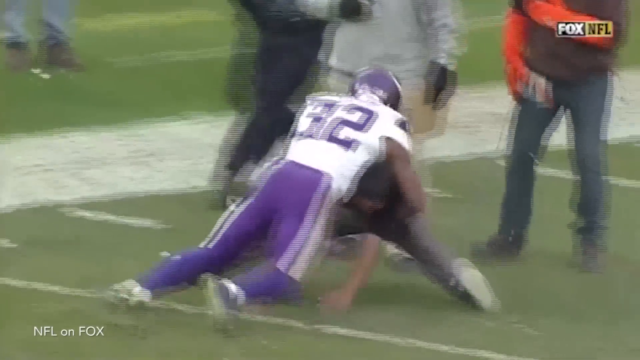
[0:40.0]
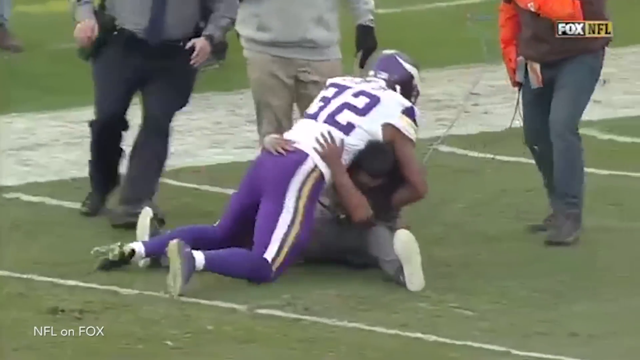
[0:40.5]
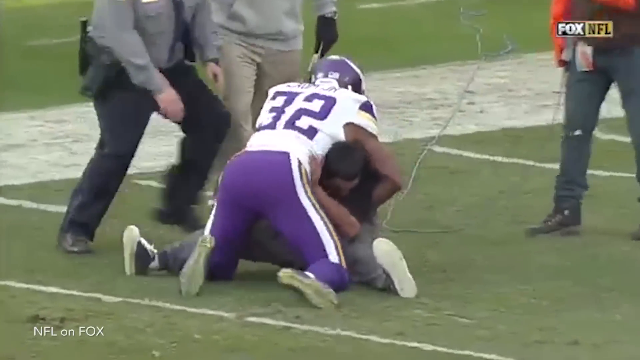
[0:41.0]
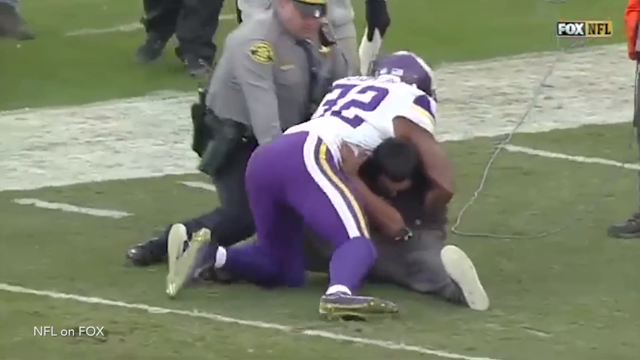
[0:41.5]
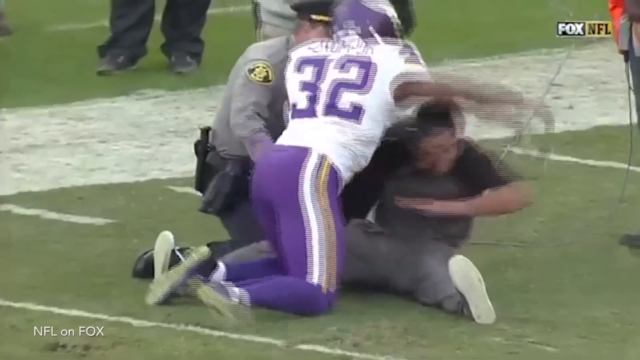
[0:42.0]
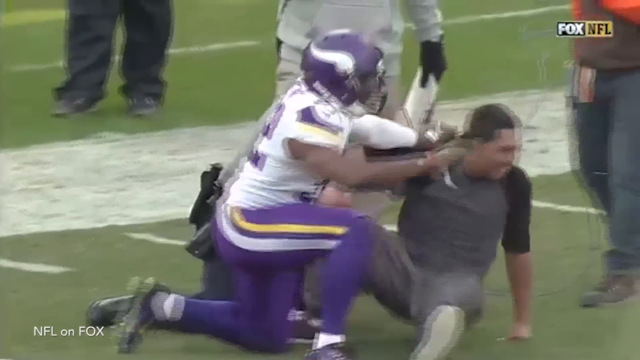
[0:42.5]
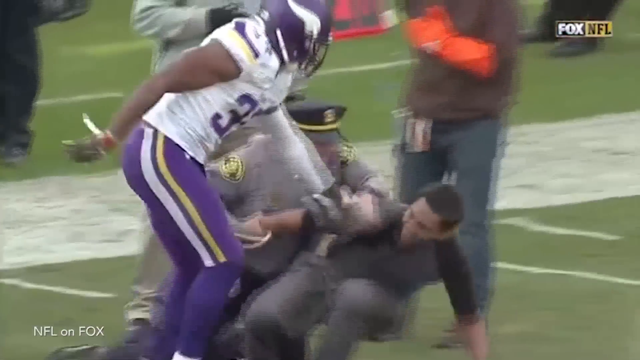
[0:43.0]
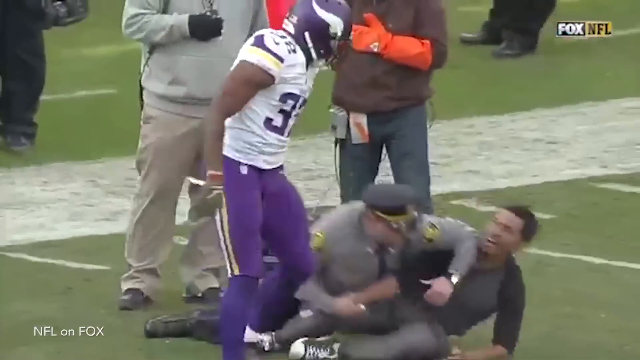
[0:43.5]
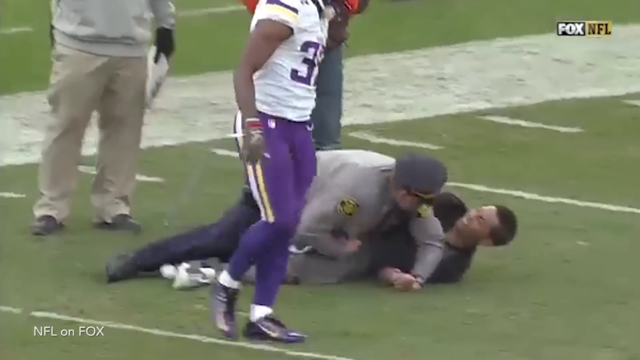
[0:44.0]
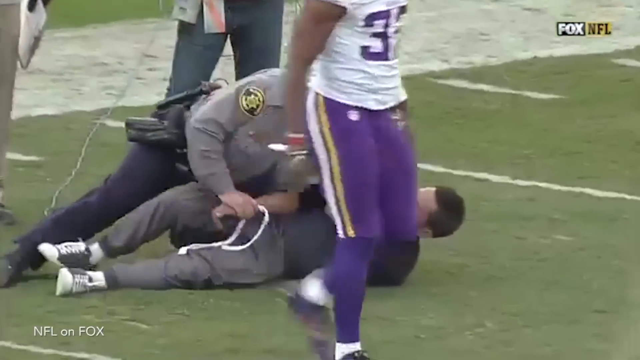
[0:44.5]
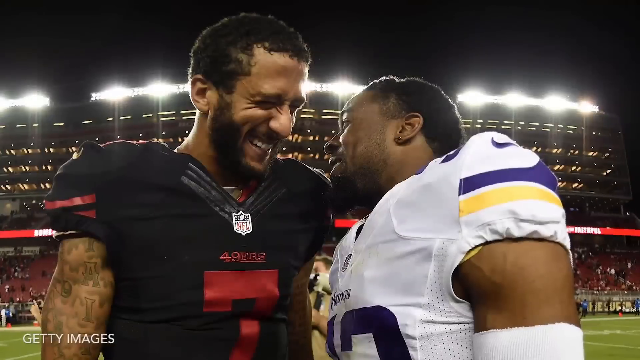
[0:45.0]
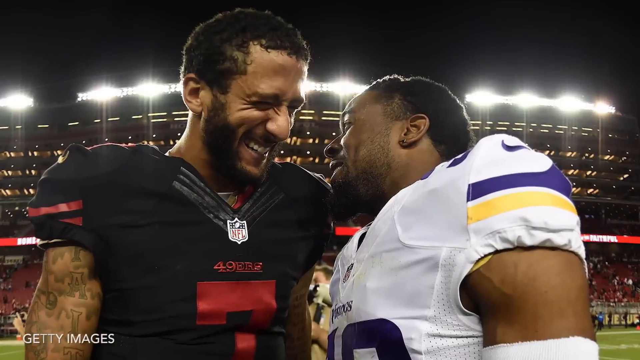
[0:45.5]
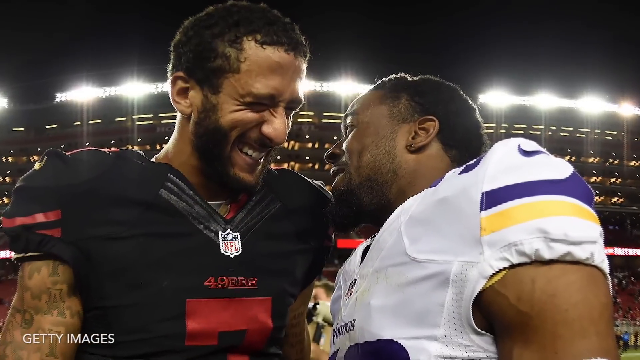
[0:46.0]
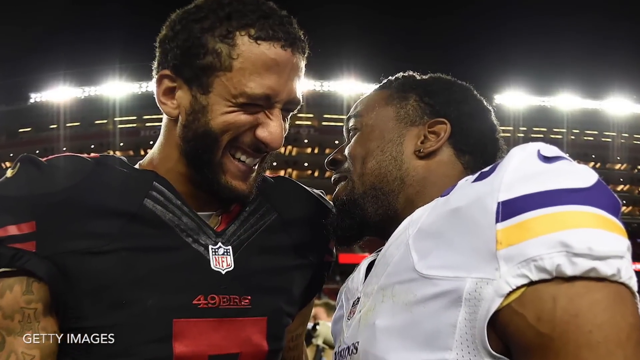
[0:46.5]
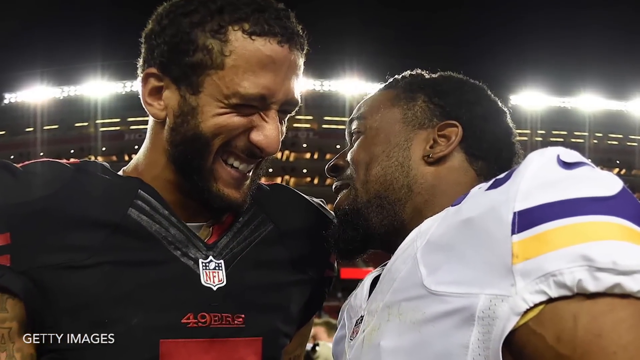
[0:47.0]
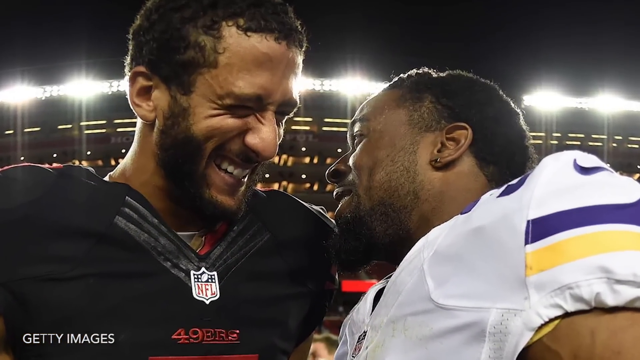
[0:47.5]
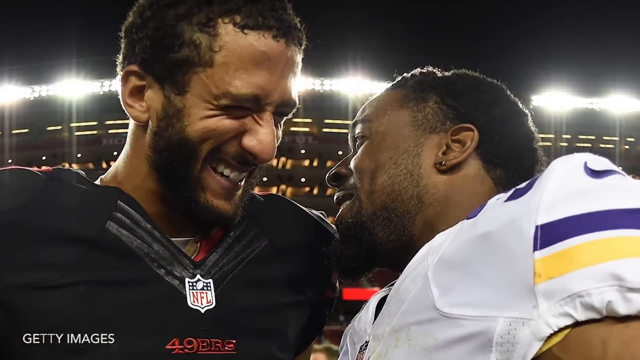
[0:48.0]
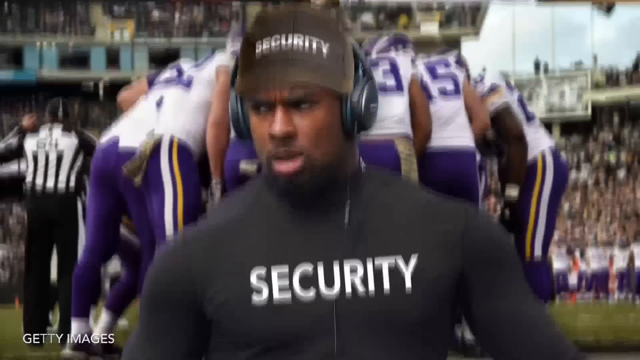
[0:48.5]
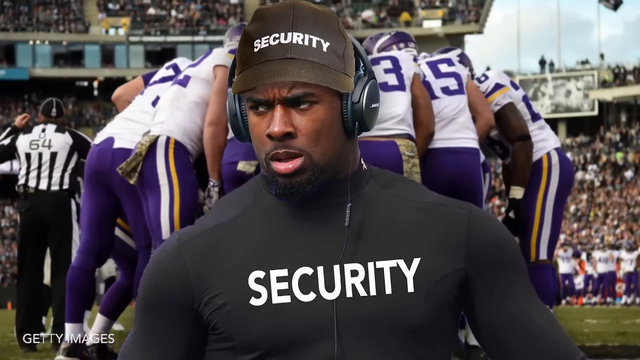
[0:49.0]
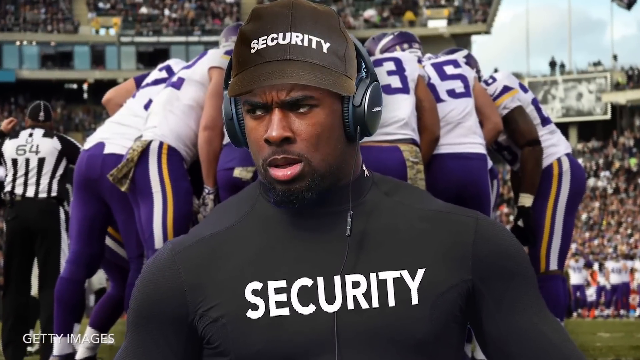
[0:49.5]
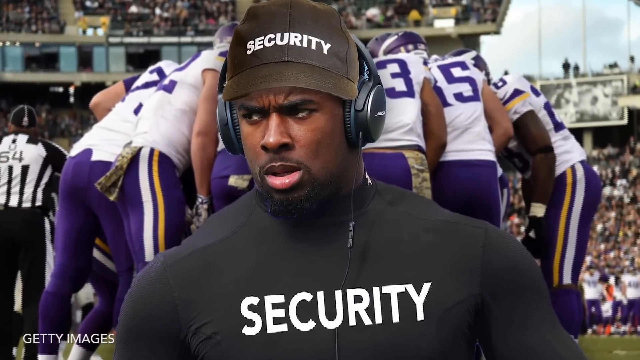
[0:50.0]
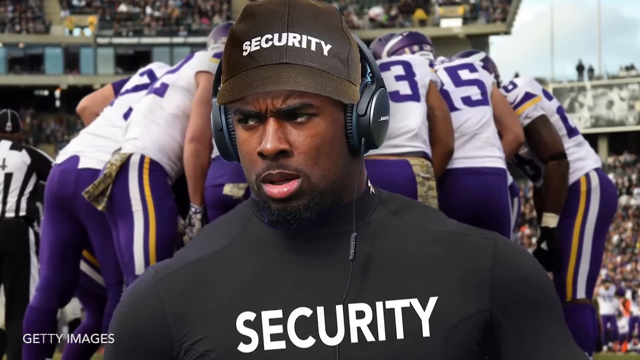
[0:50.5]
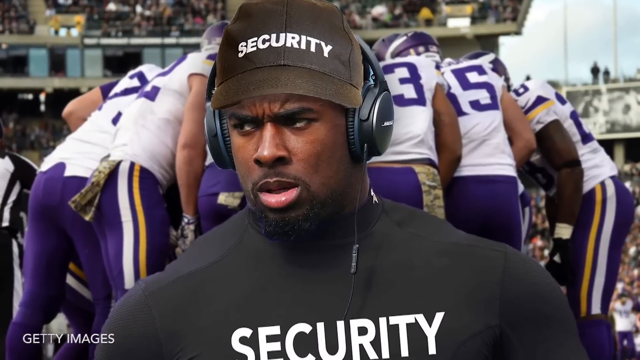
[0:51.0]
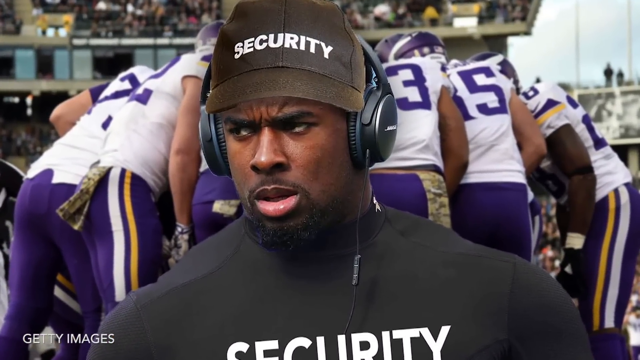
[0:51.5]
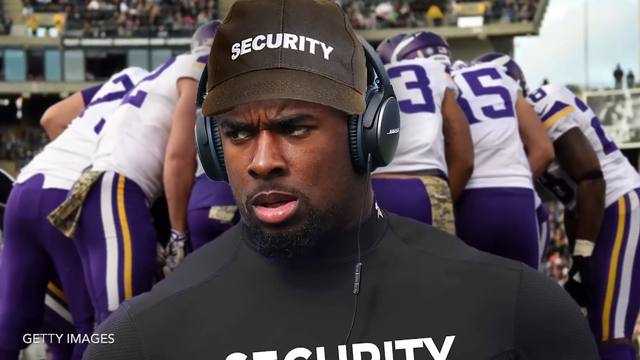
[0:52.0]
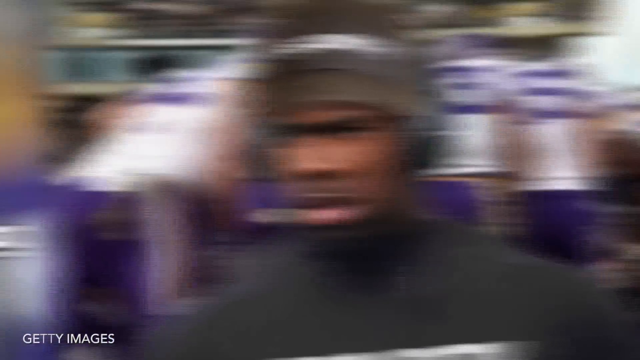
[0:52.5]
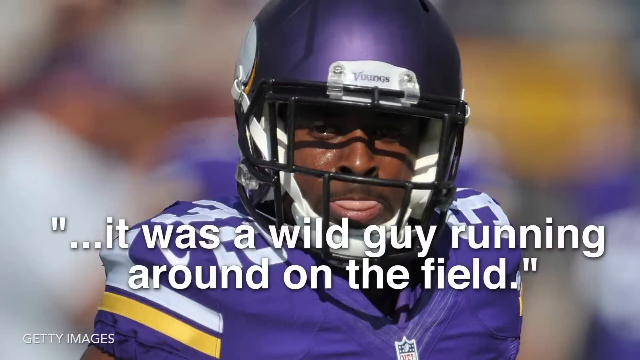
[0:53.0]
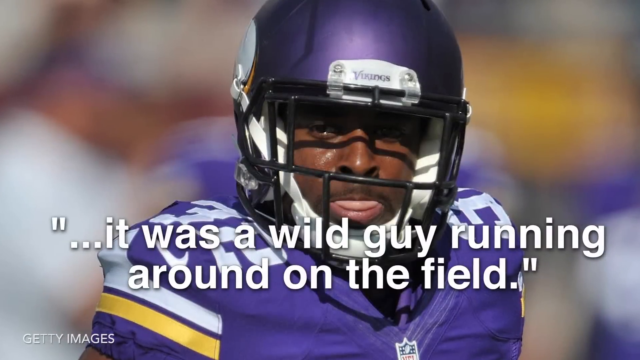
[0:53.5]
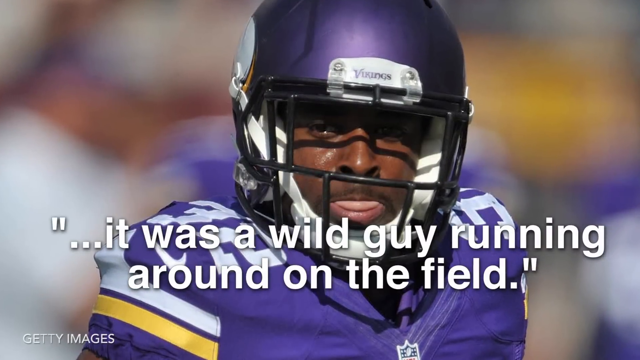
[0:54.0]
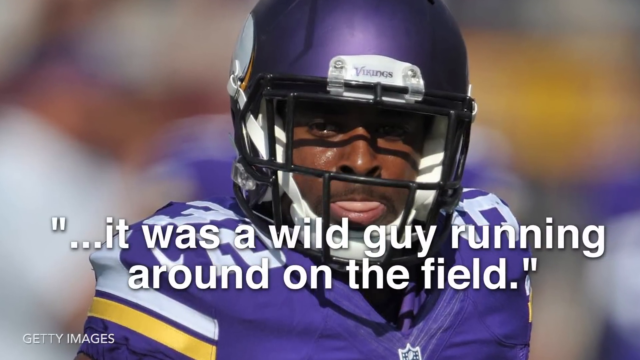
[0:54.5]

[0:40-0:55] A football player in purple pants and a white jersey with the number 32 tackles a man to the ground on a football field, while security and other staff members run toward the man. The player gets off him, and a security guard in what looks like a police uniform jumps onto the man, who is probably a fan who jumped onto the field. Next is a still photo of two players in the middle of laughing toward each other, probably at what just happened, with a zoom in on their faces. An image follows of an African-American man in a black hat, headphones and a black shirt with "security" across it; he has a furrowed brow and looks very serious and angry. In the background of that image, the Vikings team in purple pants is in a huddle with a ref to the left, with a big stadium behind. Then the number 32 player who made the tackle appears in his purple helmet, with a quote reading "it was a wild guy running around the field."